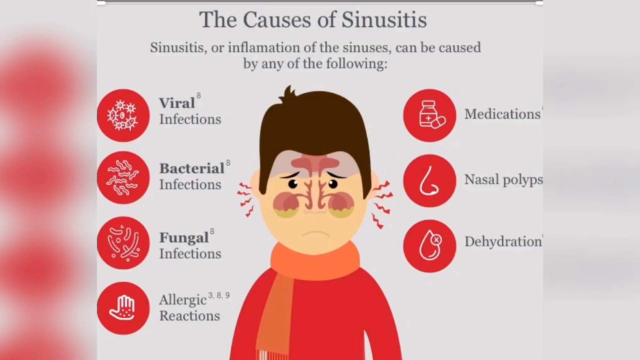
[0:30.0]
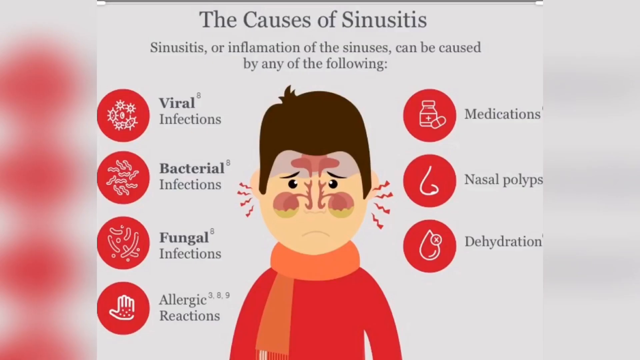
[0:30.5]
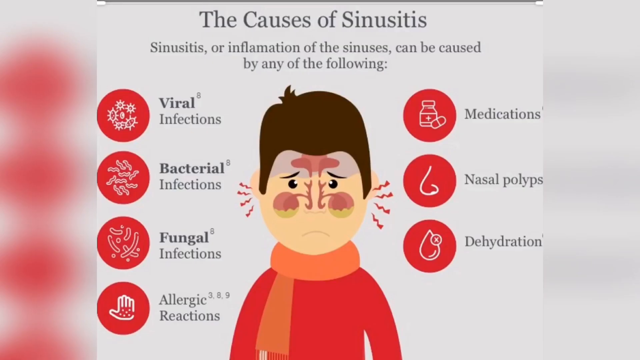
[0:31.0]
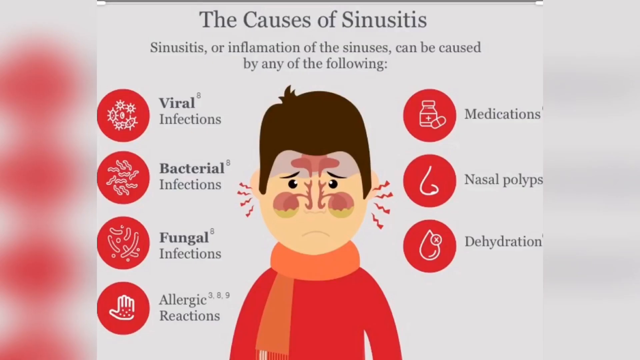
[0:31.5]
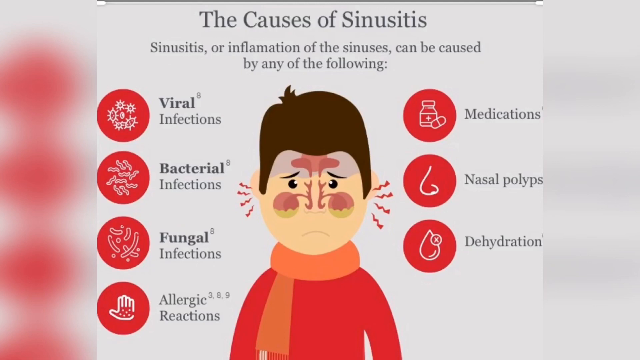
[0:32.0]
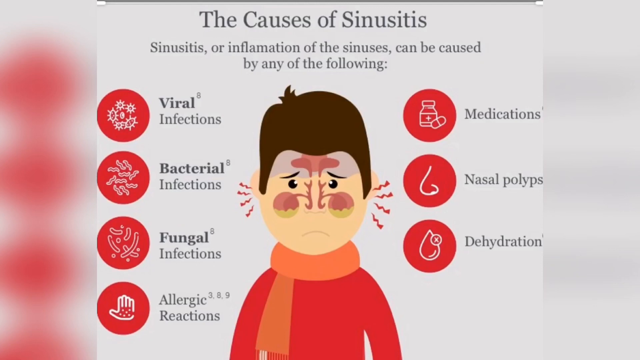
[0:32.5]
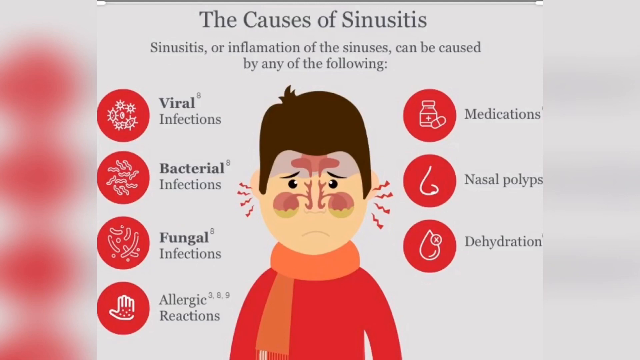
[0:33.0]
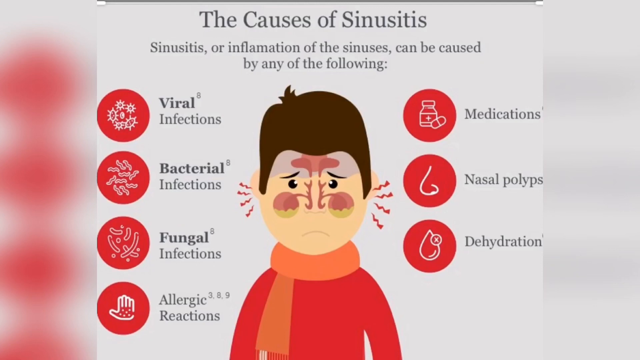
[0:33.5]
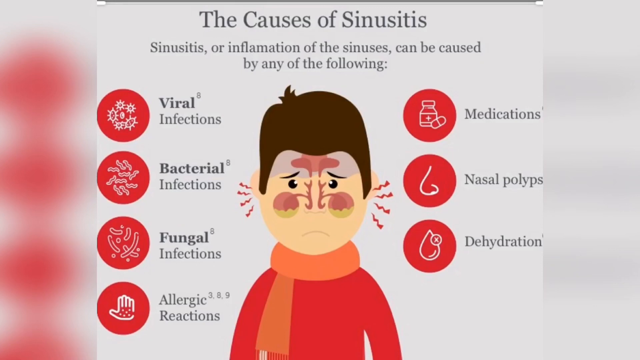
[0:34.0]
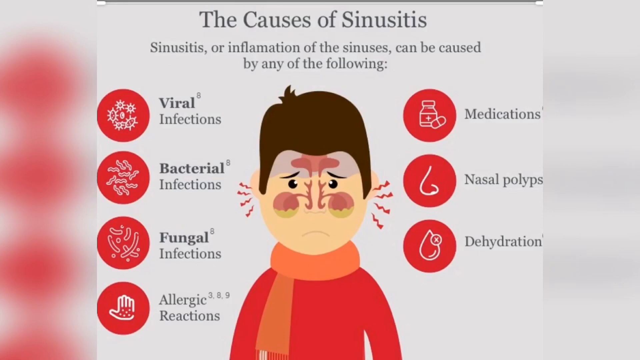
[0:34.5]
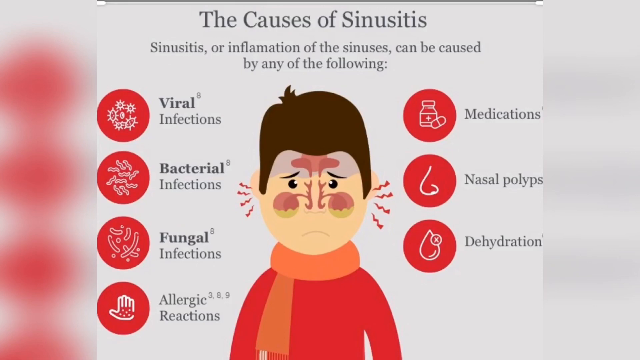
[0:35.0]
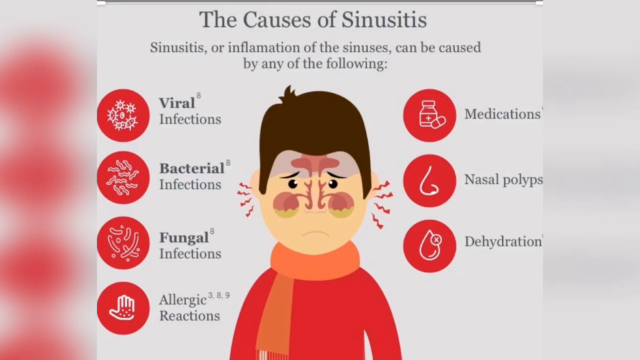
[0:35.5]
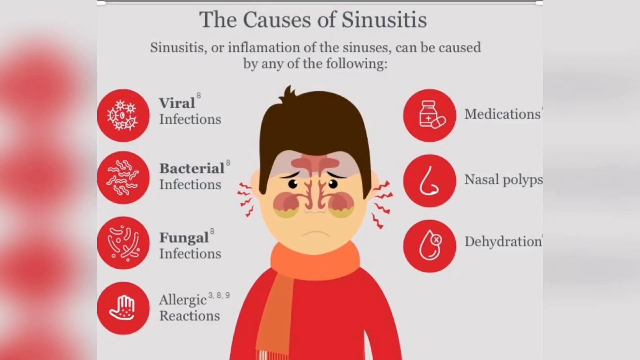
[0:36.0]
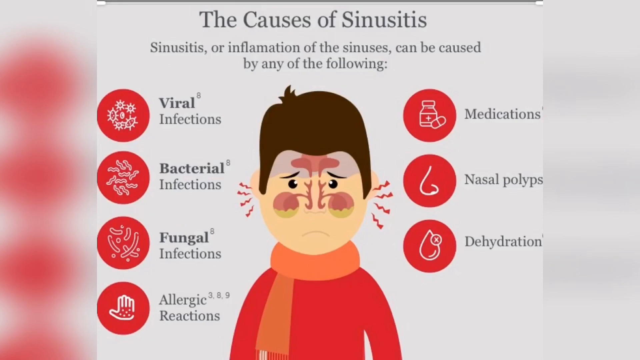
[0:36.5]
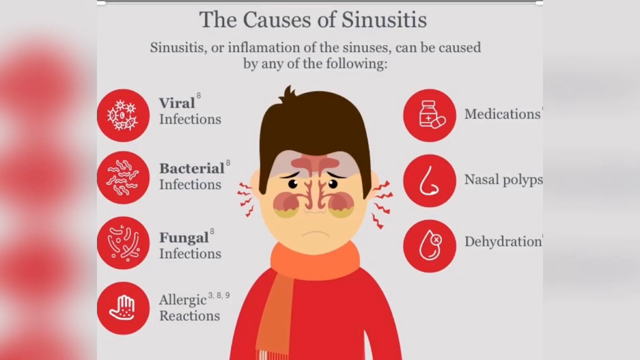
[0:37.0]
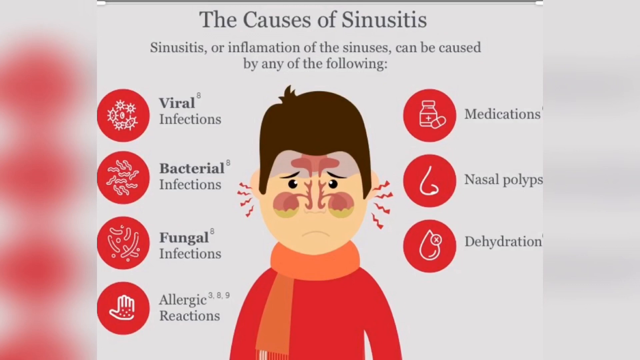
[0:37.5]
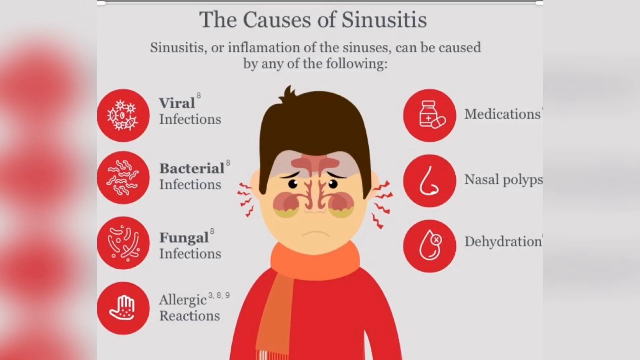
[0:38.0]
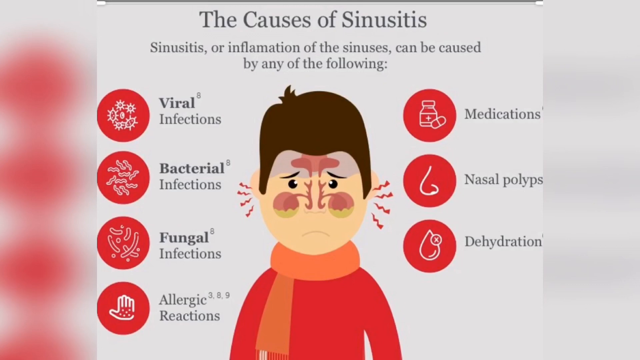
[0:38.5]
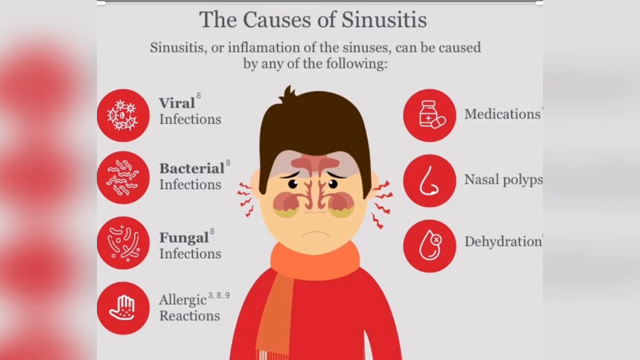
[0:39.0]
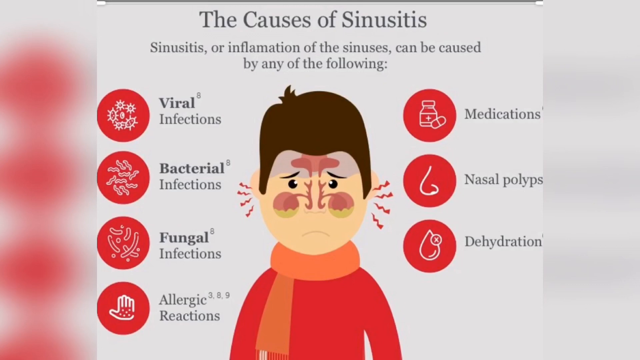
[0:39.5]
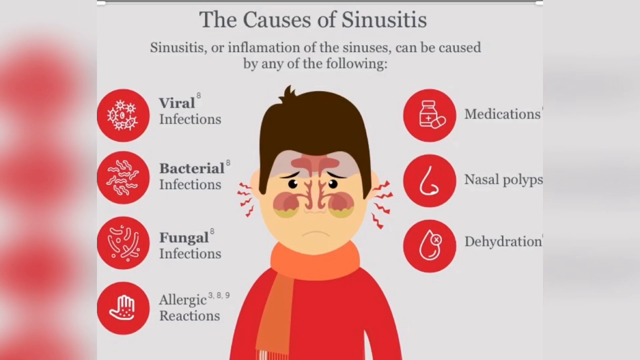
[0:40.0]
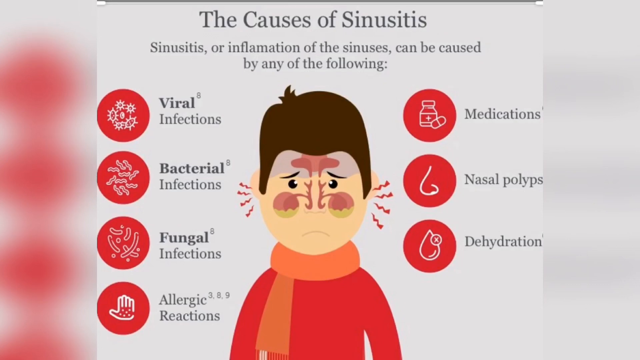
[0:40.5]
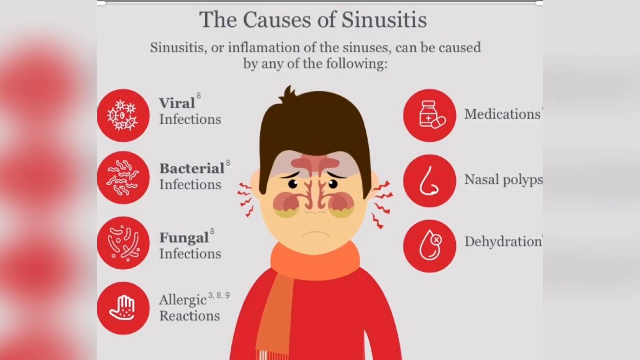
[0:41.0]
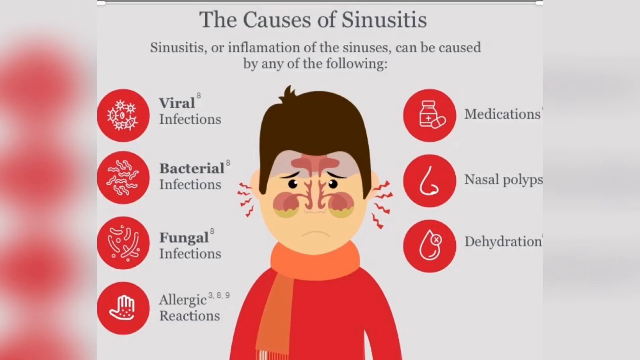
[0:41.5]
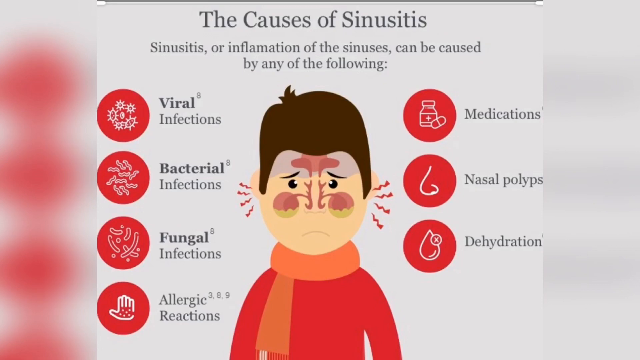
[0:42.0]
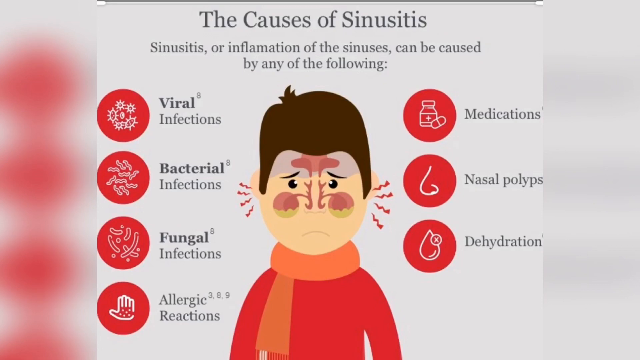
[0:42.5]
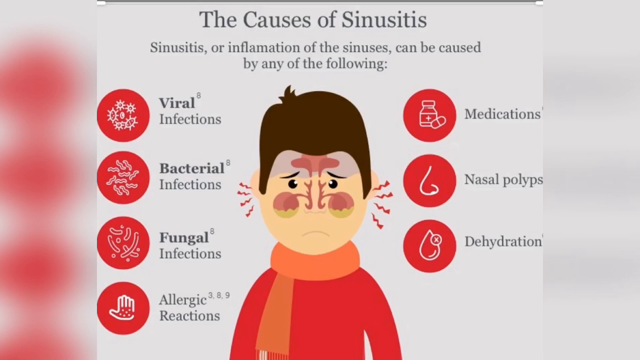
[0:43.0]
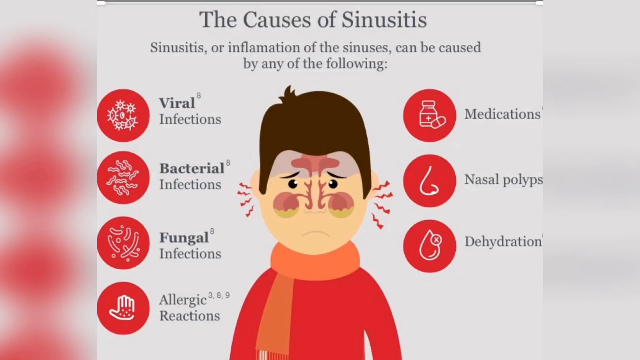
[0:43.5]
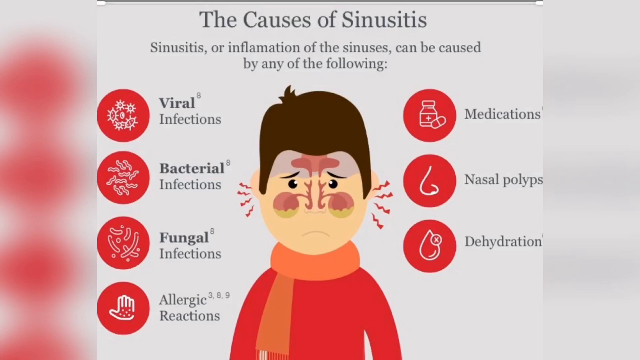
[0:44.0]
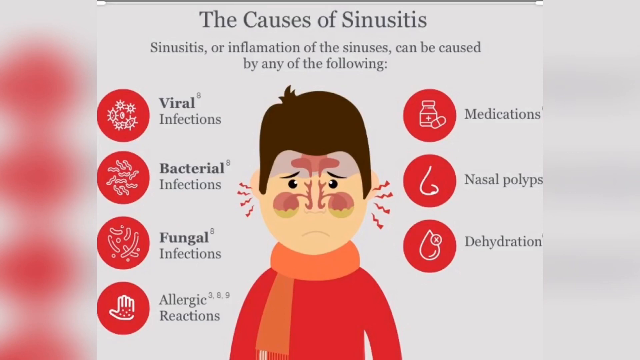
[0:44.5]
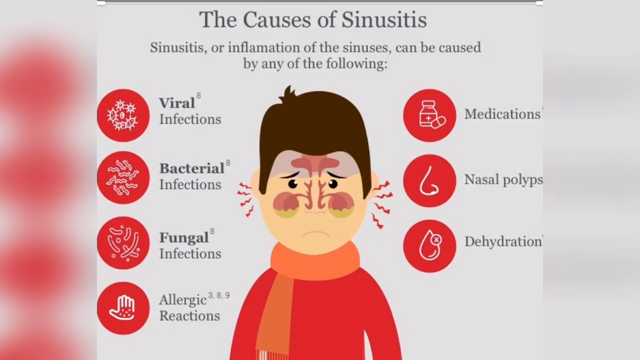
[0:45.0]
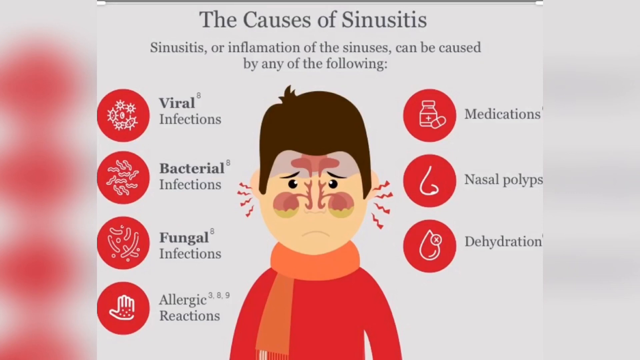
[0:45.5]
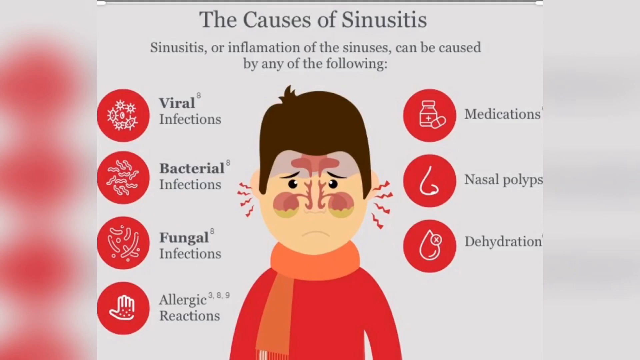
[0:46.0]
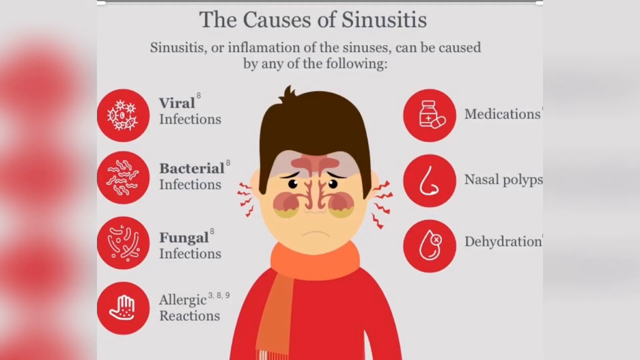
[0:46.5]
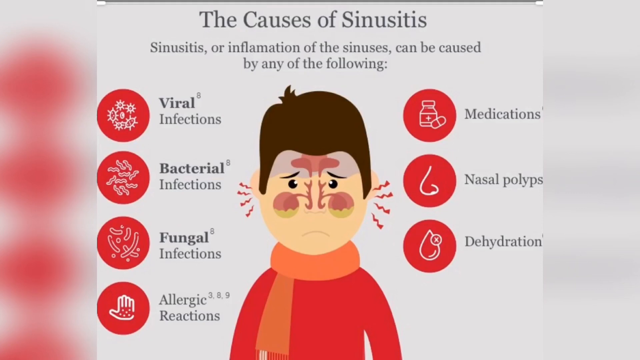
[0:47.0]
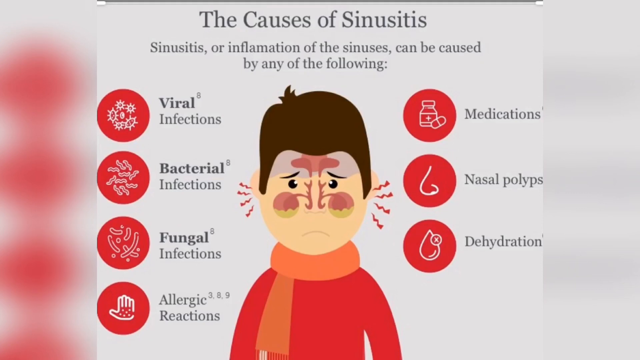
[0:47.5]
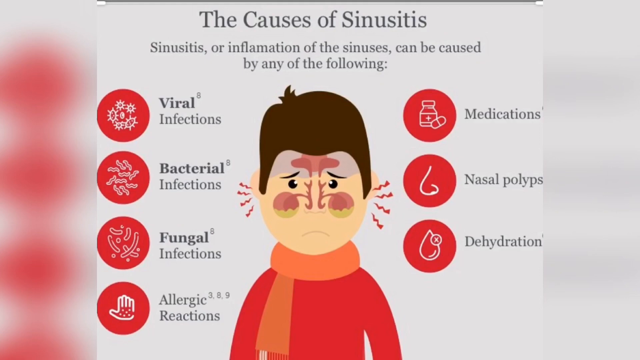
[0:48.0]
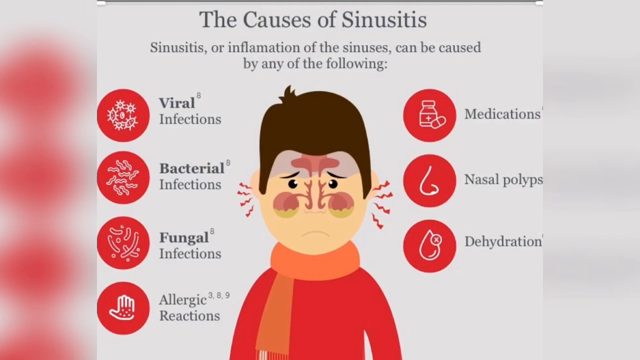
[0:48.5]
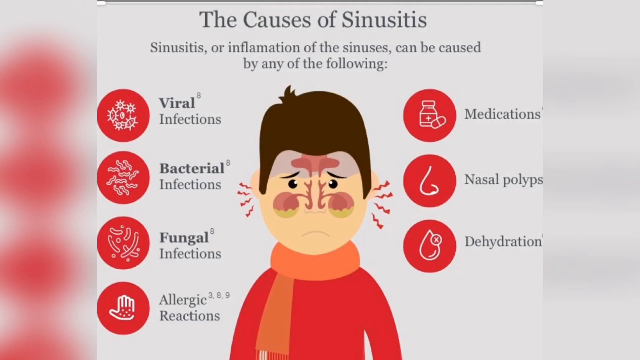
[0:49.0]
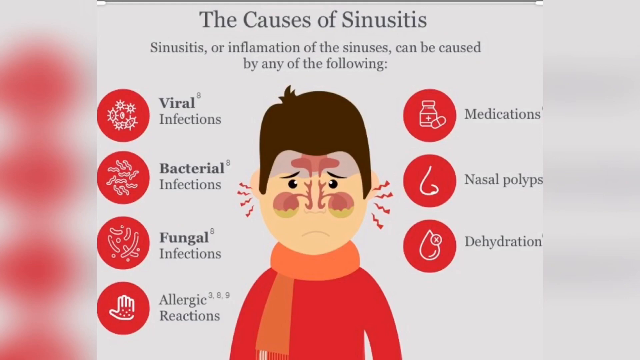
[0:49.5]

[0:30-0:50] A computer-generated image shows a male having sinus problems. The top of the image lists the causes of sinusitis, and below that it says "sinusitis or inflammation of the sinuses can be caused by any of the following". Seven causes are listed, each with an image representing it: viral infections, bacterial infections, fungal infections, allergic reactions, medications, nasal polyps, and dehydration. Dehydration has a water drop and an X, nasal polyps has a drawing of a person's nose, medications has a drawing of a pill in a bottle, and allergic reactions has a picture of a hand with dots on it. The fungal, bacterial, and viral causes each have little creatures matching them. The images are white overlays on red backgrounds.